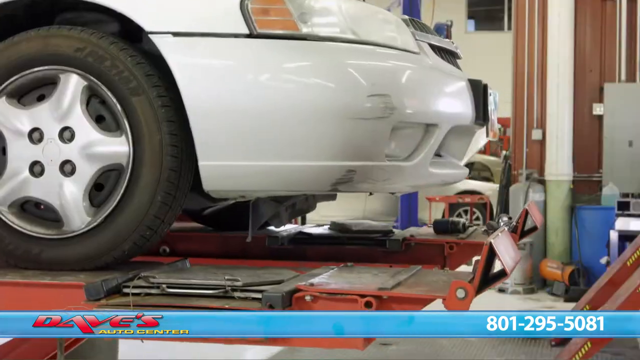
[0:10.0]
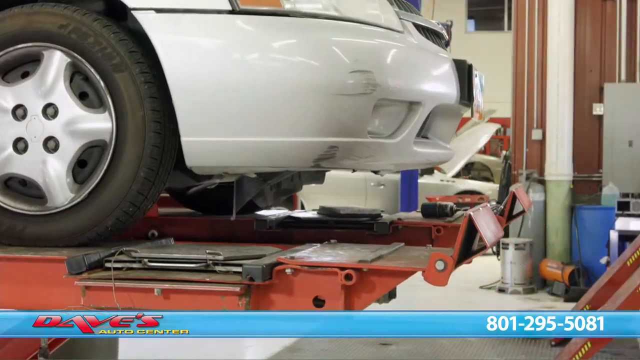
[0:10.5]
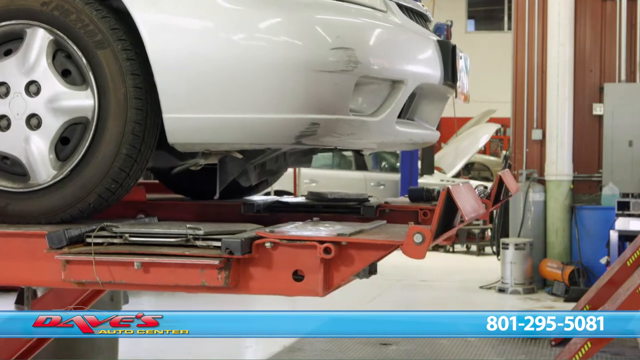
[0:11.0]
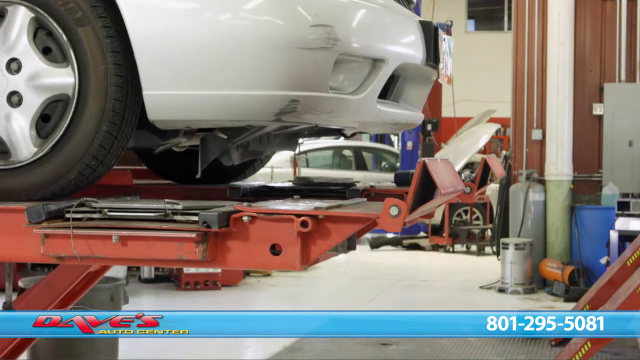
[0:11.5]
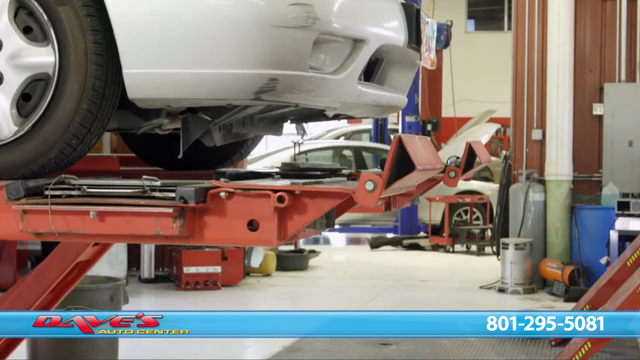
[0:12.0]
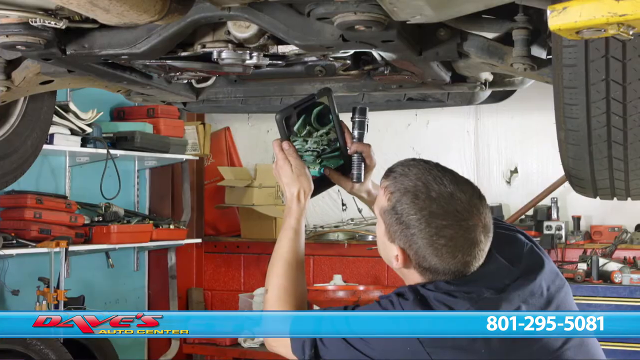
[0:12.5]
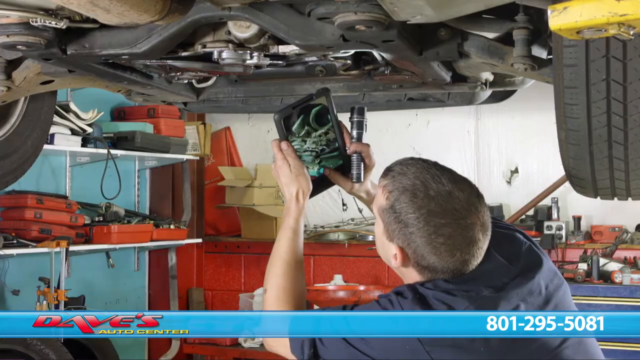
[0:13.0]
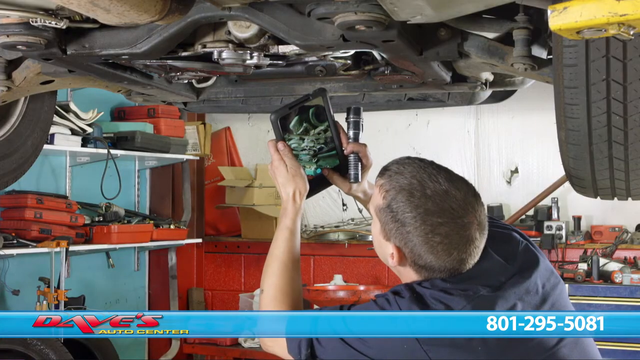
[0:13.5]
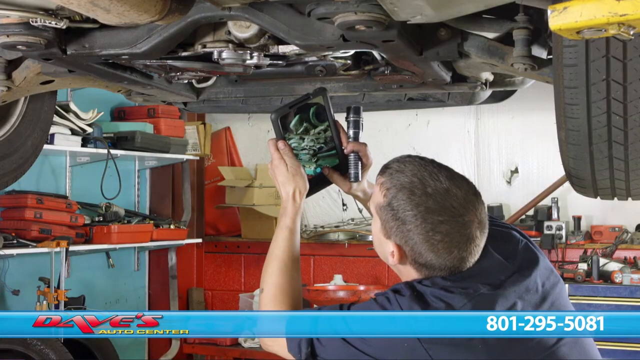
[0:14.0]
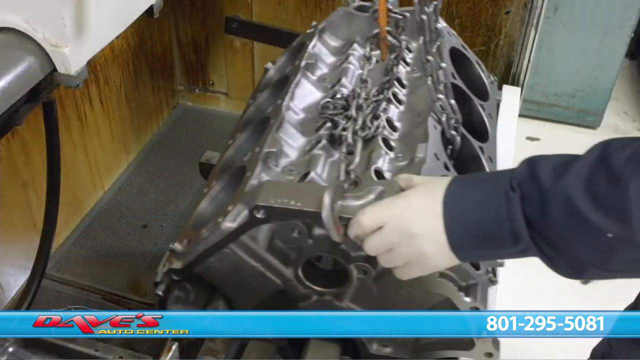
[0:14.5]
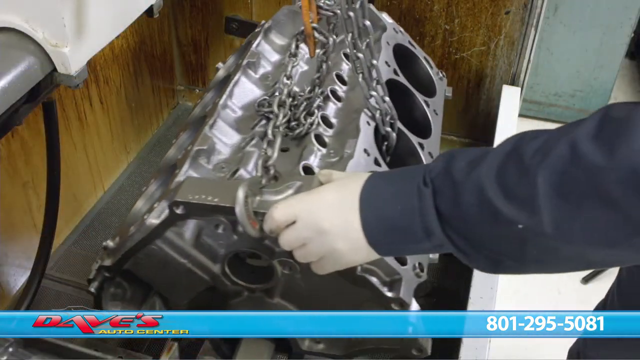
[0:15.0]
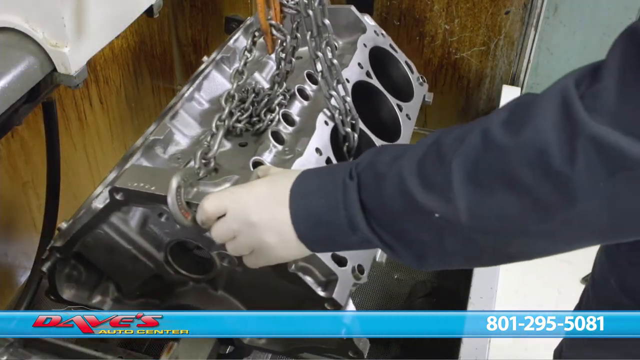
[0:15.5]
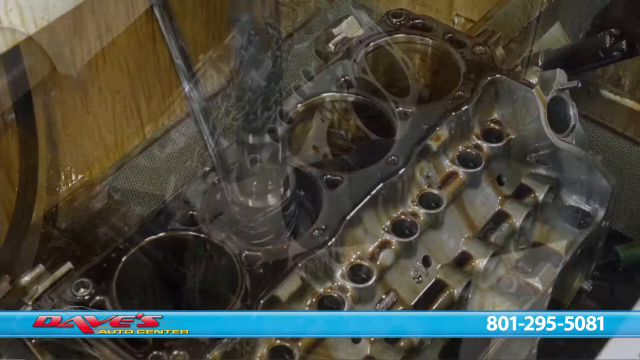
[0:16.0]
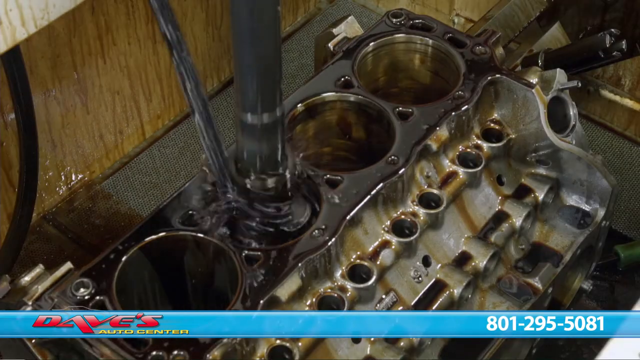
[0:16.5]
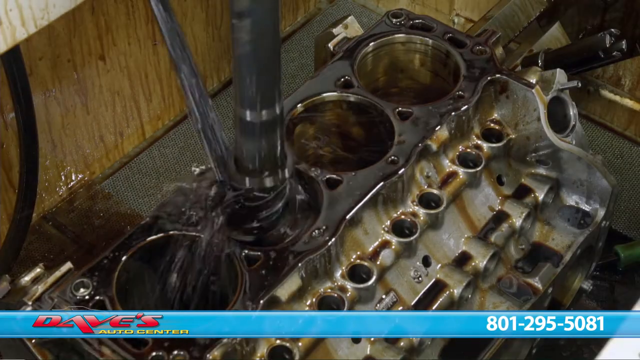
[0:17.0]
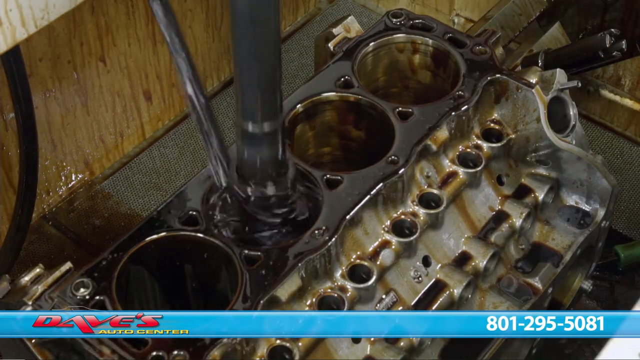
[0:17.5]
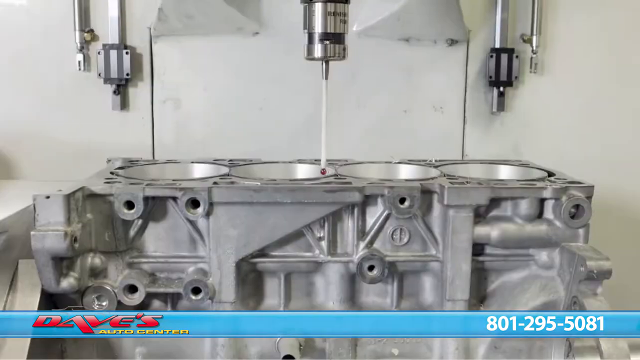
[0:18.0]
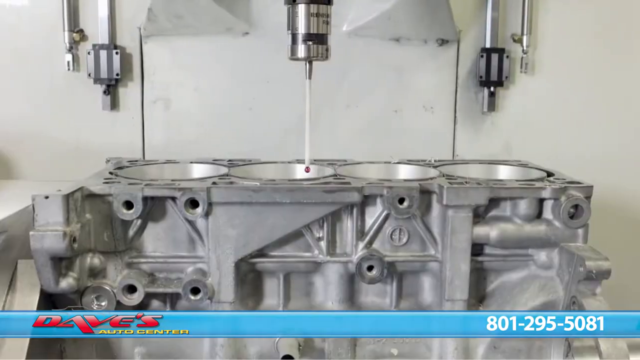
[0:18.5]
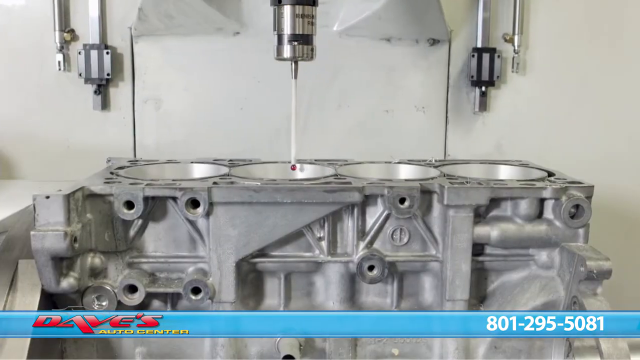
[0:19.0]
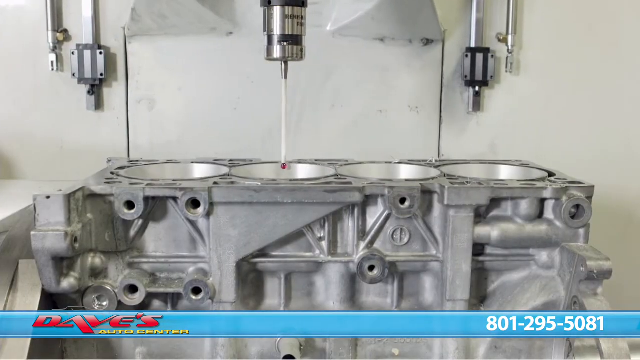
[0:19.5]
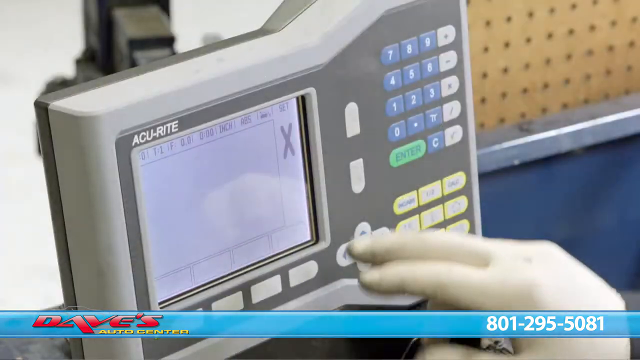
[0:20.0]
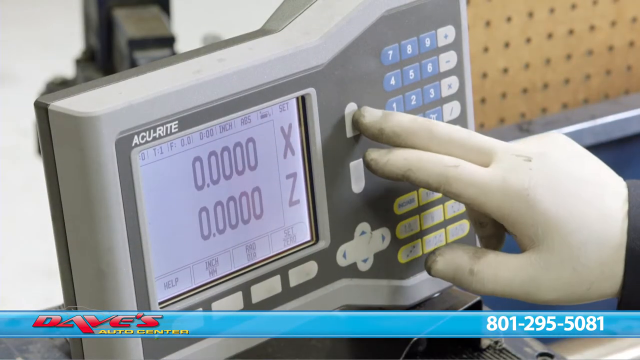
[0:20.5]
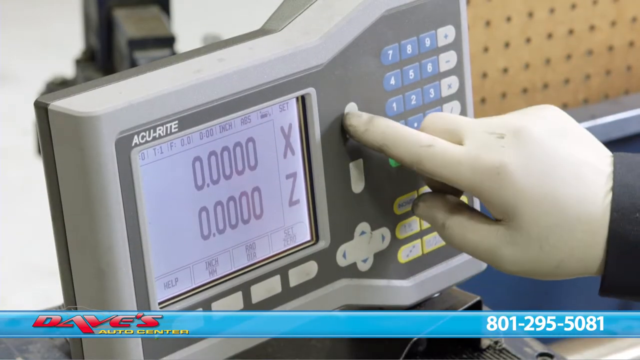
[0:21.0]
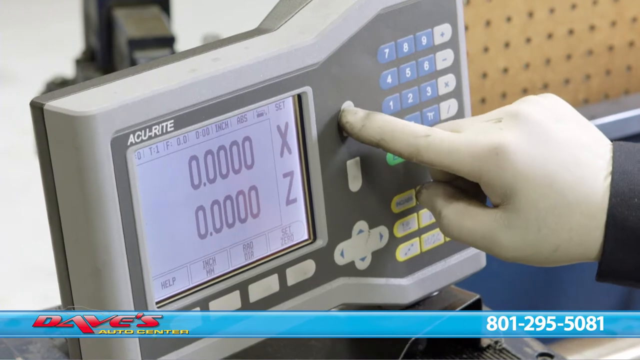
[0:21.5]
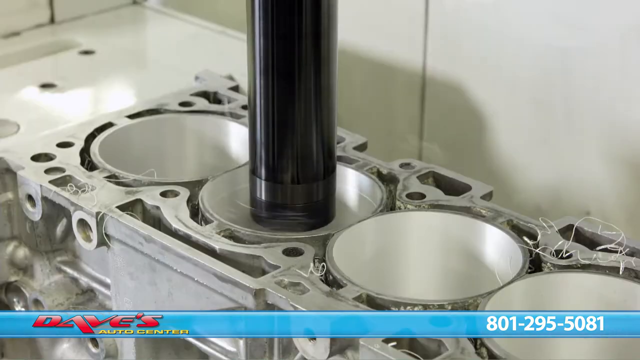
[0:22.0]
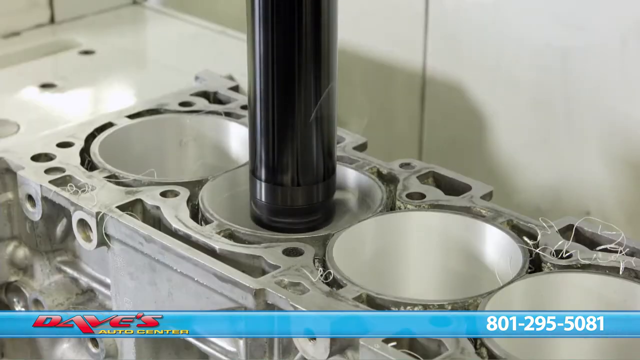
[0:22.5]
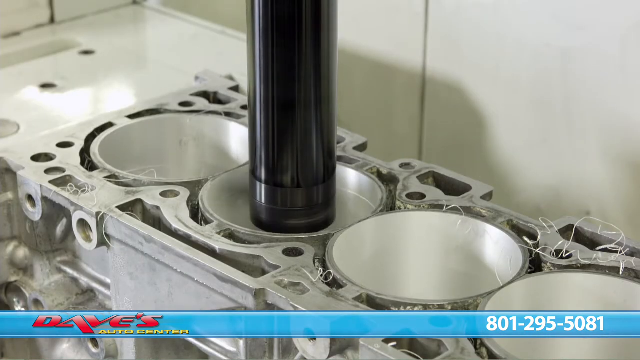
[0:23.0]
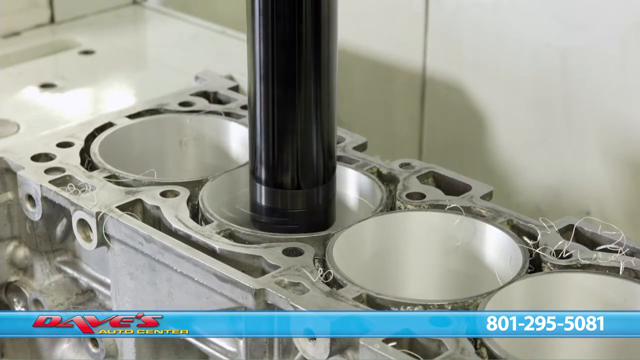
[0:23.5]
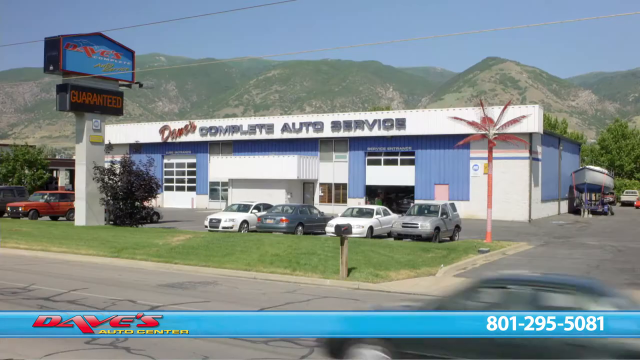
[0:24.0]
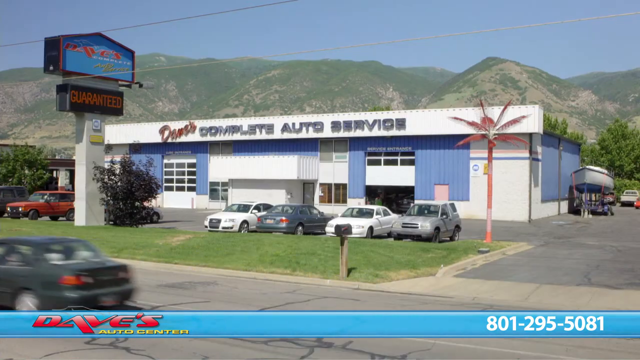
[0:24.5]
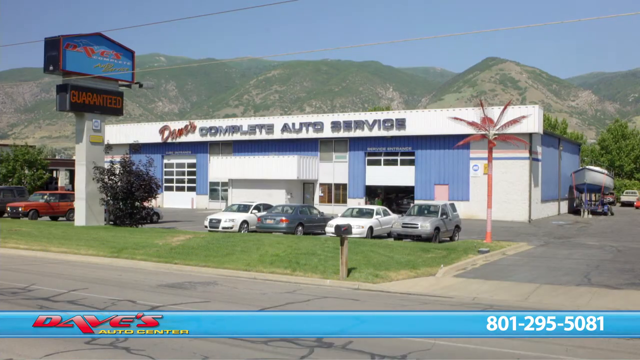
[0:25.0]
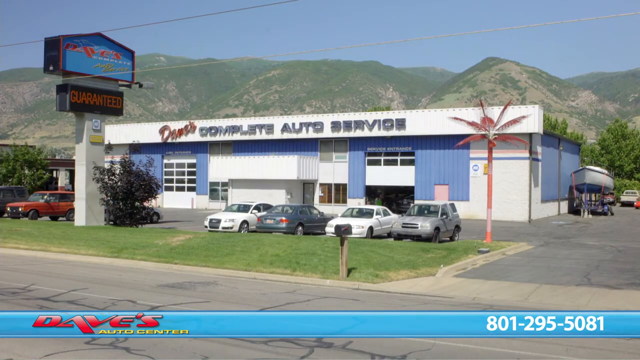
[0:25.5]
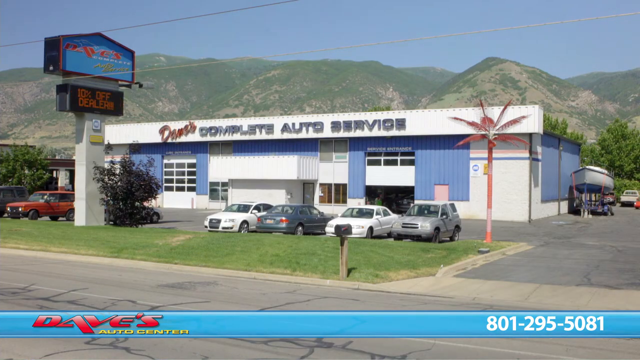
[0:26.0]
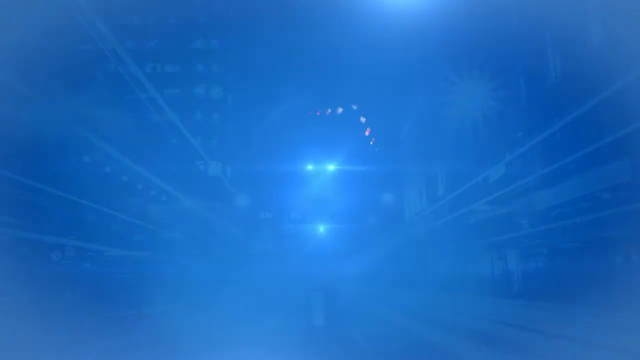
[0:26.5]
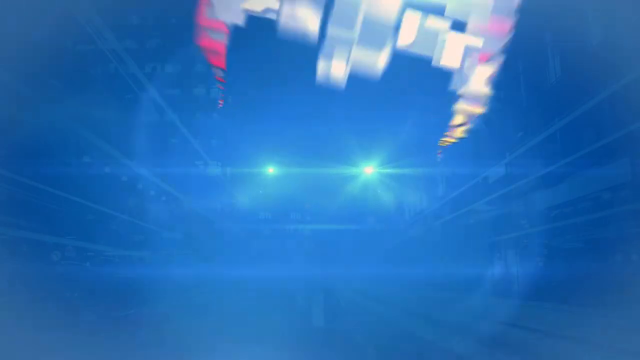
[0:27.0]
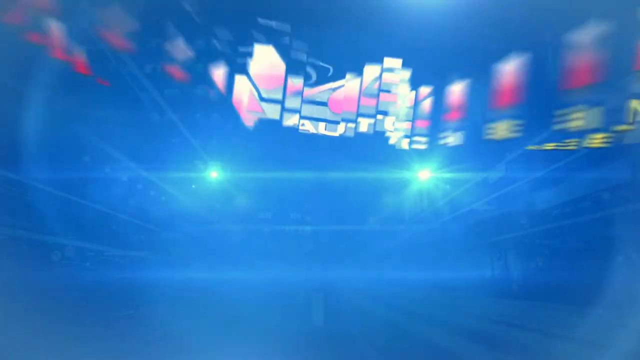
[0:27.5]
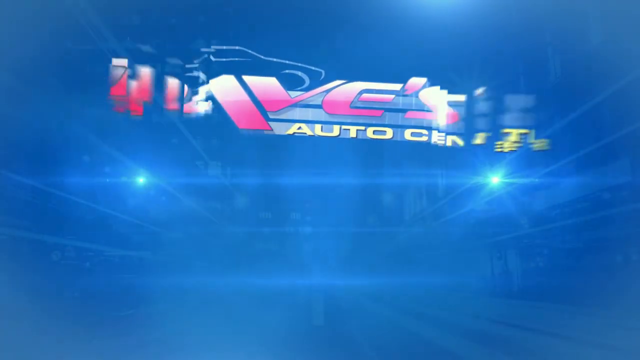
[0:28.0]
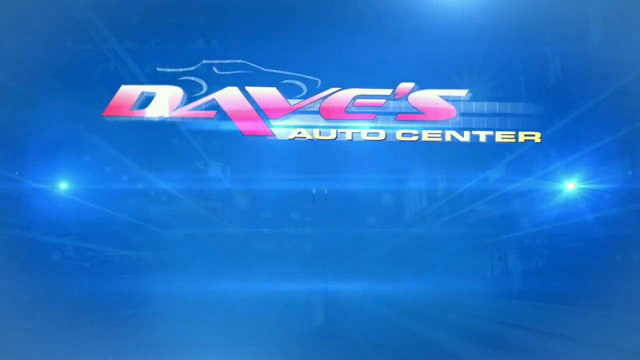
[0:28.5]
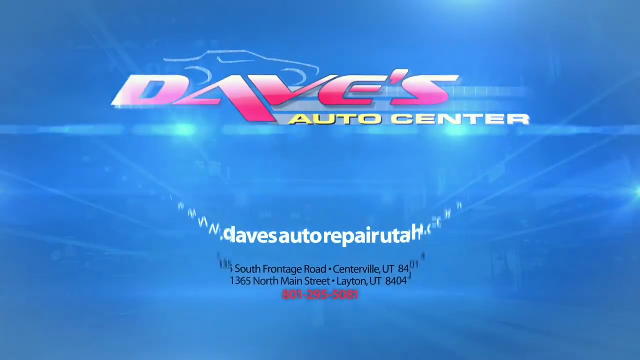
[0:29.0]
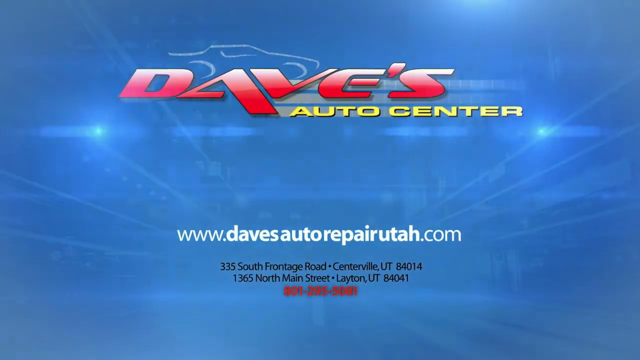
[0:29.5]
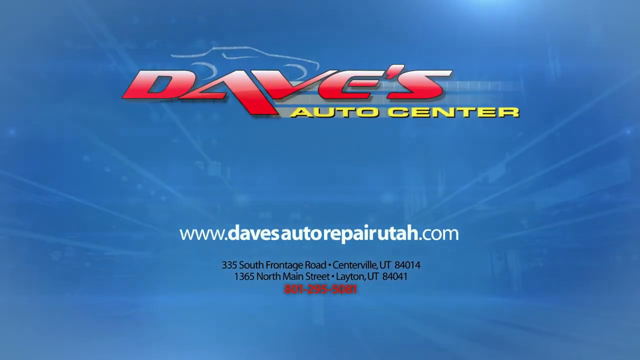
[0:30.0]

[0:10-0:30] A white car is on a light orange lift, with only its front bumper visible and the passenger side tire on the left side. The car is slowly lifted up into the air and back toward the left. The video cuts to a man underneath the car holding up a tablet; he looks like he is touching something on it with his fingers while also looking at what is underneath the car. He also has a flashlight in one of his hands, and the top of his head is visible as he looks at the tablet and under the car. Next, an engine block is moved into a container that looks like it is for some kind of deep cleaning; the block is connected to a chain, and a hand guides it into place. Another shot shows an engine block with a shaft going down into it, boring out the cylinders; as the shaft goes up and down it spits a lot of oil all over the place. Another image shows a different part of the vehicle with four cylinders facing upward and a machine on top that has a white finger sticking out with a red dot on the end of it. The video then switches to an instrument panel with text in its upper left side and some letters and numbers on it. A hand in a white glove pushes on the panel, which has up and down buttons as well as some blue buttons with numbers on them; the person uses their index finger to push the up button. The video returns to some cylinders, where a big black rod or shaft comes down and spins inside a cylinder, throwing strings of metal out from inside it. Next, the front of the building is shown from the street, with "Dave's Complete Auto Service" across the front, four cars parked in front of it and rolling hills in the background. Finally, a blue screen appears with words that come out like light, first out of focus and then coming into focus. At the top it says "Dave's Auto Center," followed by the web address "www.davesautorepairutah.com".